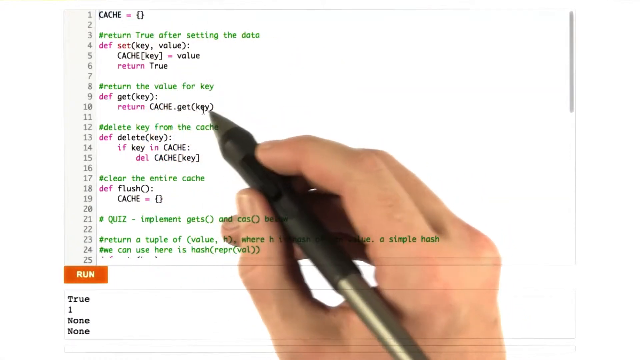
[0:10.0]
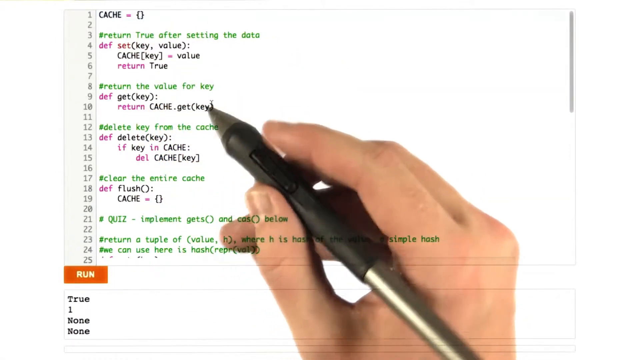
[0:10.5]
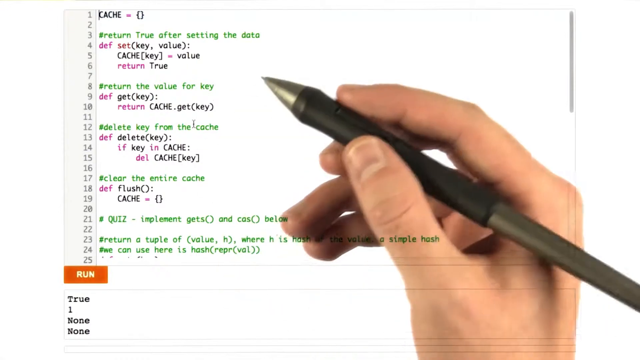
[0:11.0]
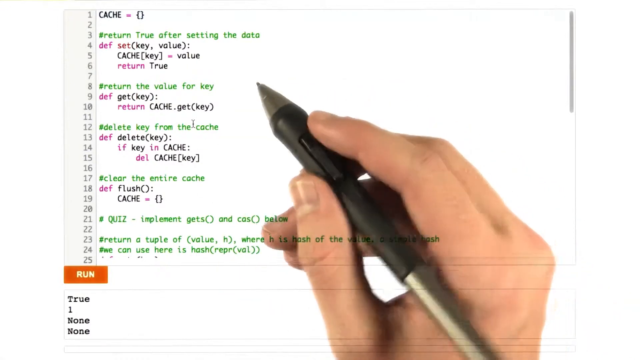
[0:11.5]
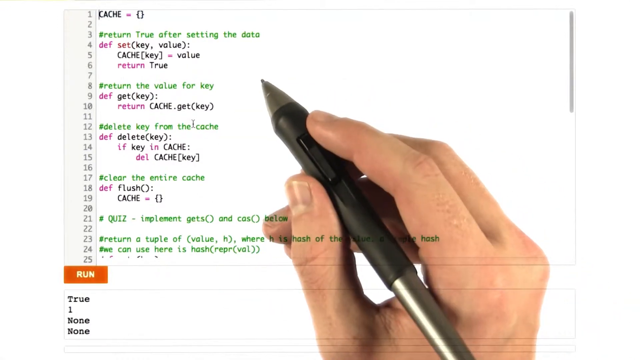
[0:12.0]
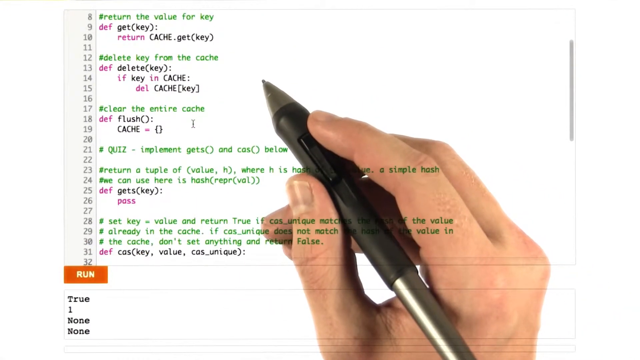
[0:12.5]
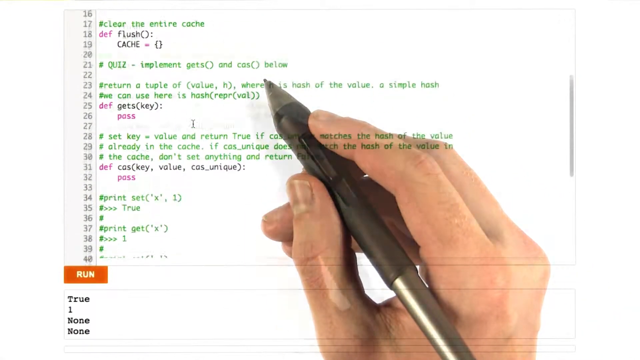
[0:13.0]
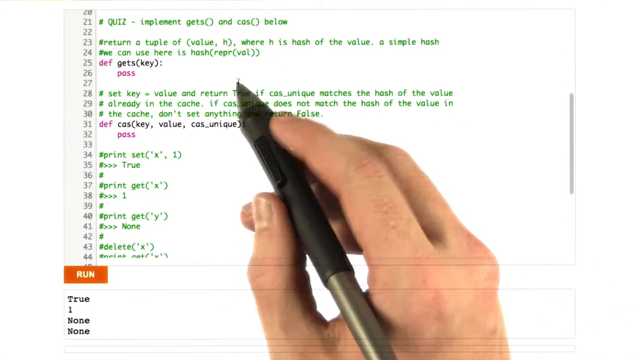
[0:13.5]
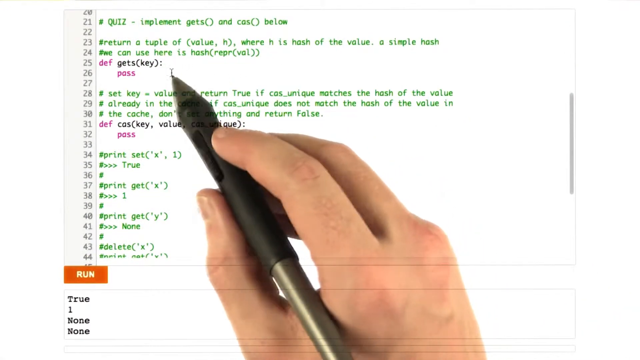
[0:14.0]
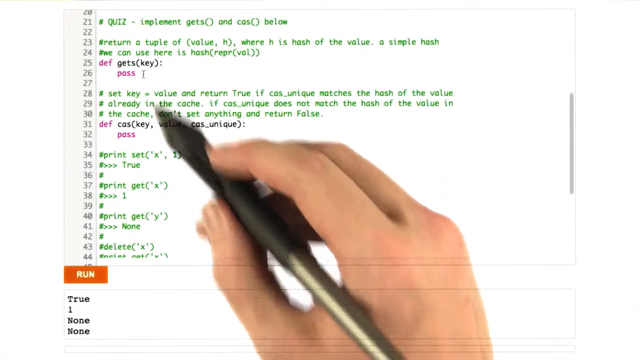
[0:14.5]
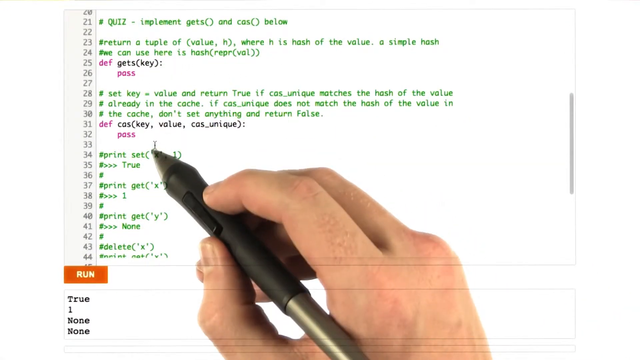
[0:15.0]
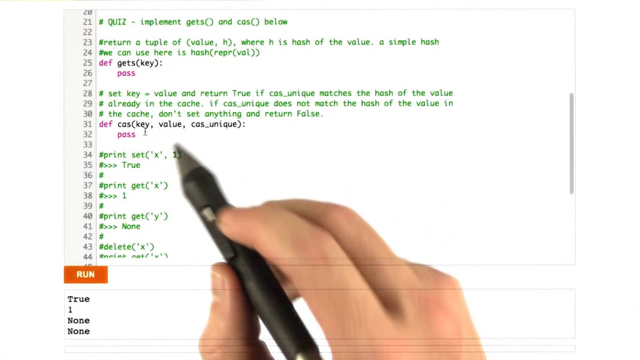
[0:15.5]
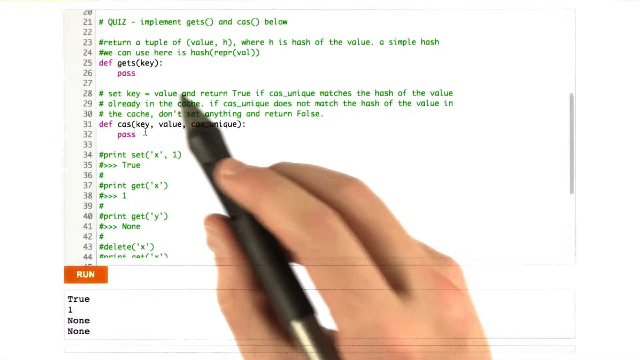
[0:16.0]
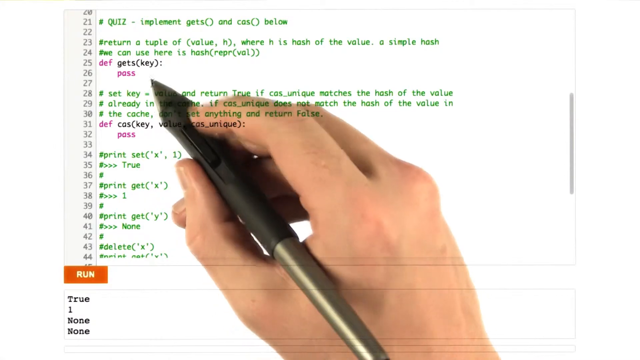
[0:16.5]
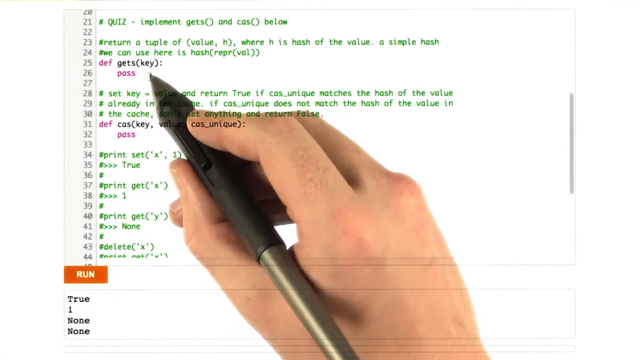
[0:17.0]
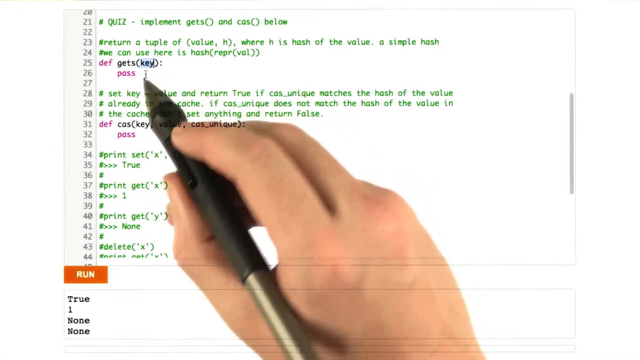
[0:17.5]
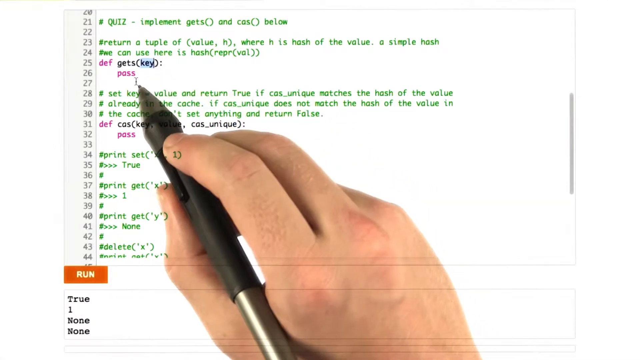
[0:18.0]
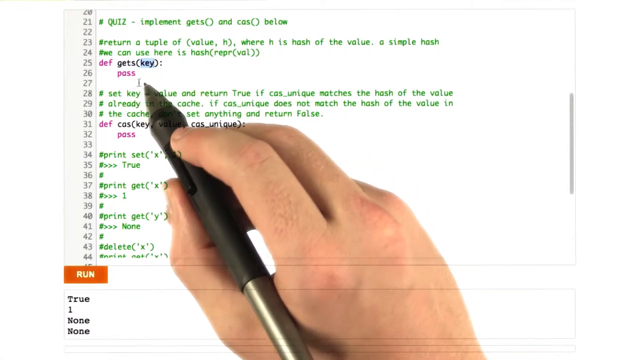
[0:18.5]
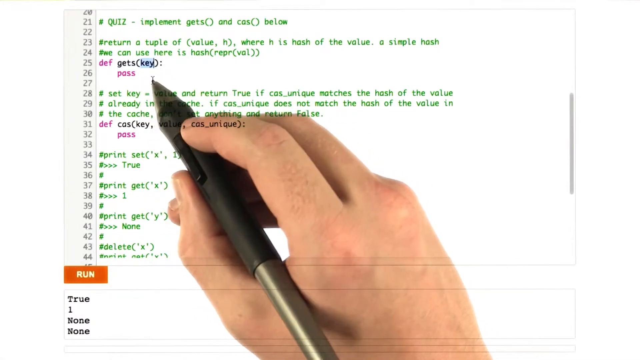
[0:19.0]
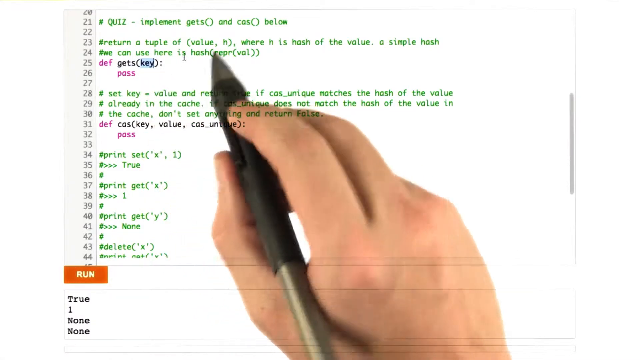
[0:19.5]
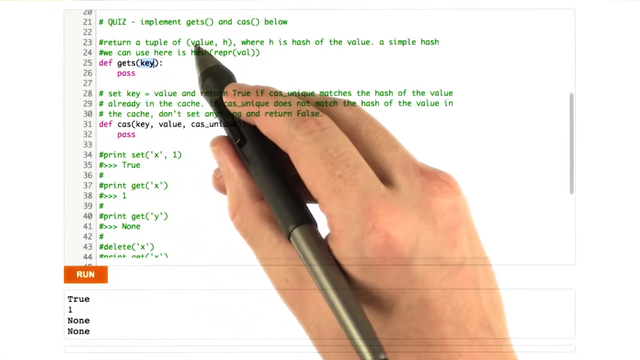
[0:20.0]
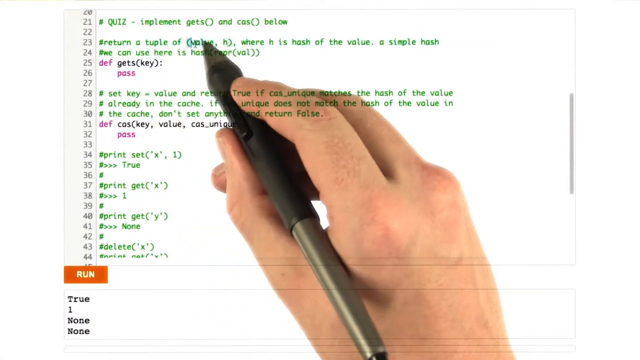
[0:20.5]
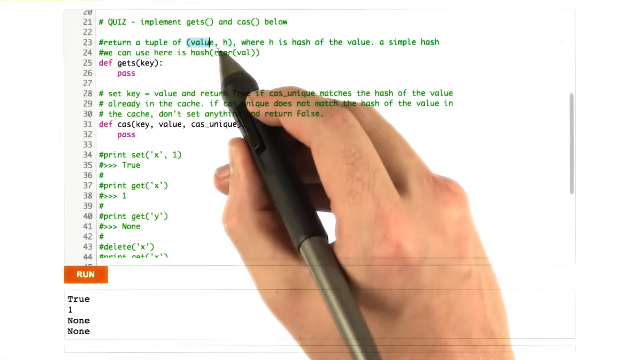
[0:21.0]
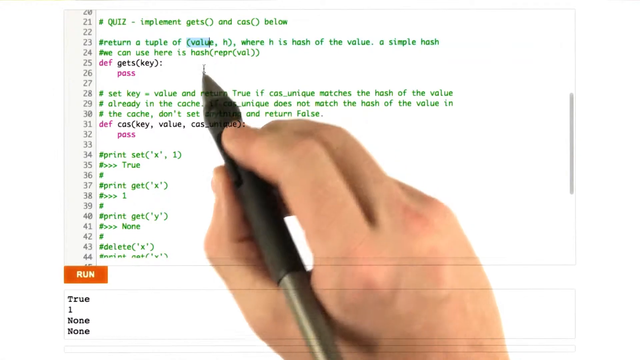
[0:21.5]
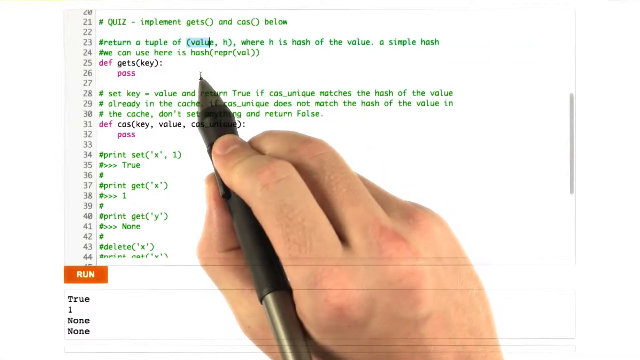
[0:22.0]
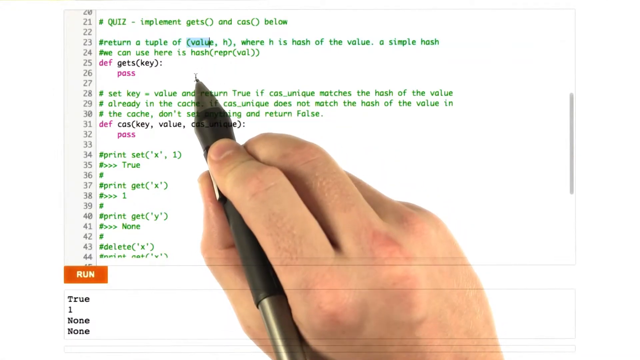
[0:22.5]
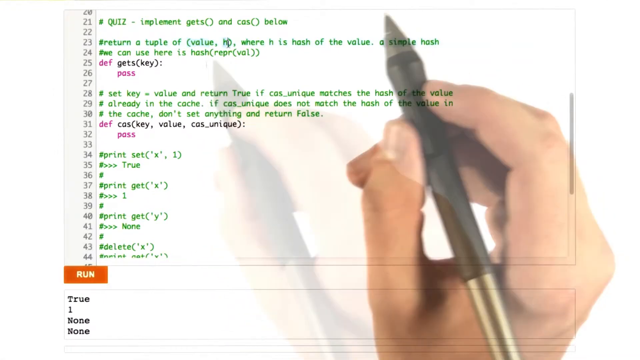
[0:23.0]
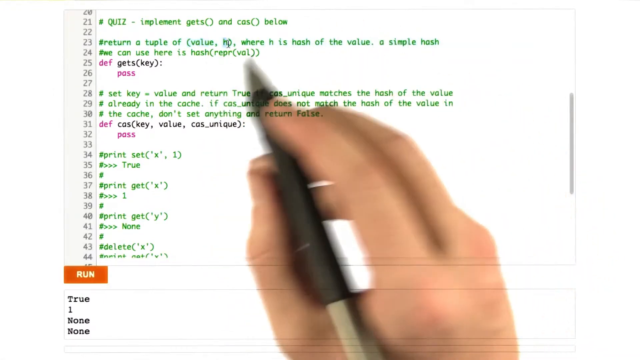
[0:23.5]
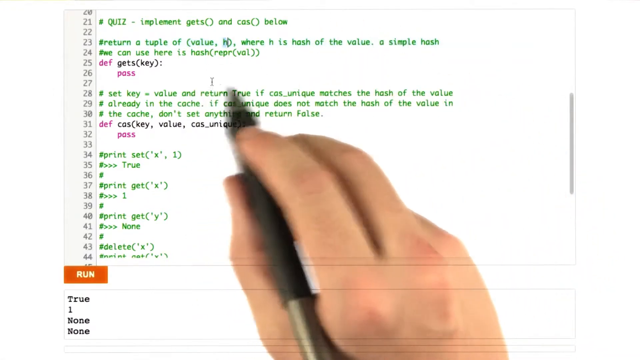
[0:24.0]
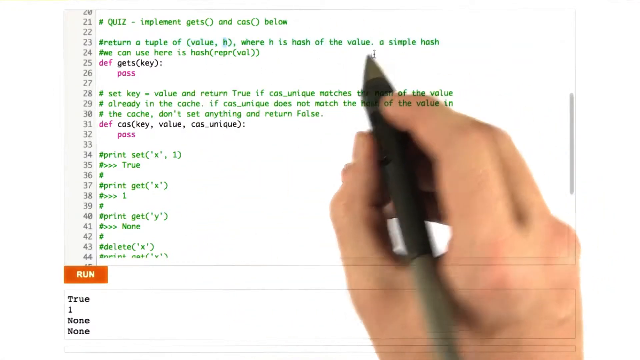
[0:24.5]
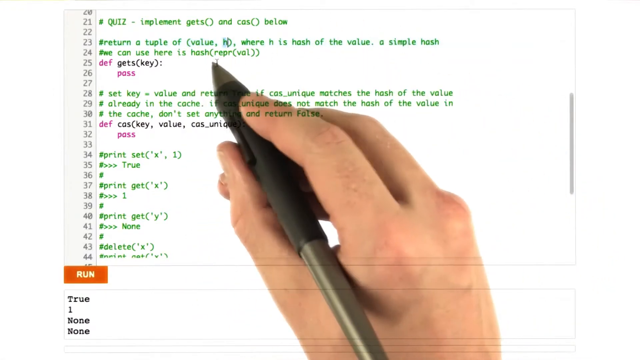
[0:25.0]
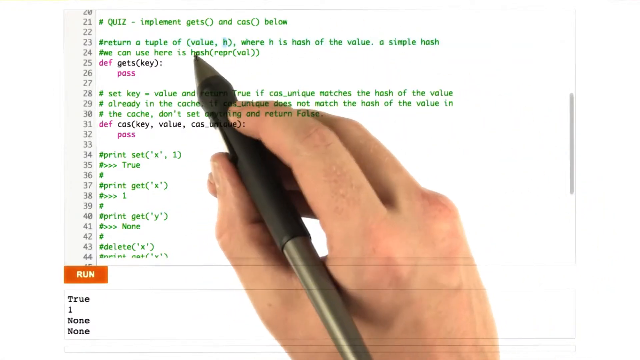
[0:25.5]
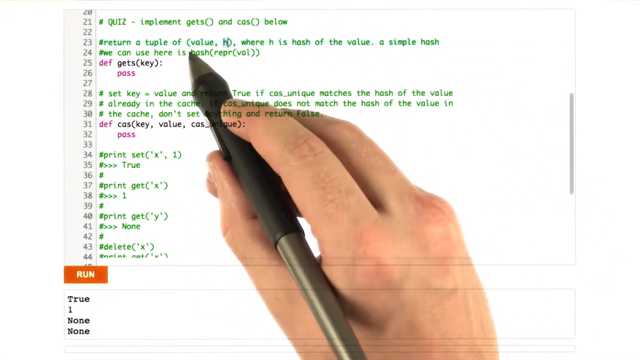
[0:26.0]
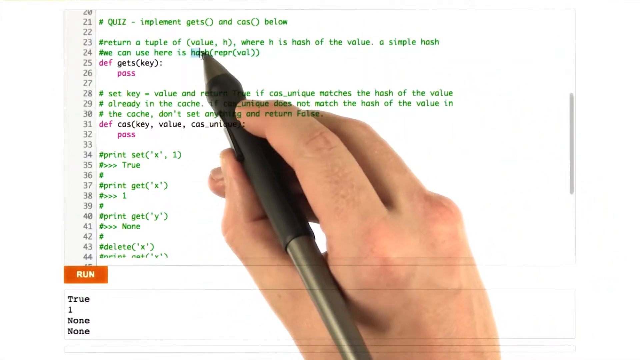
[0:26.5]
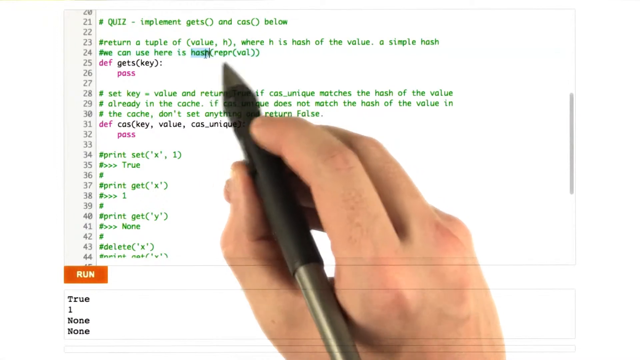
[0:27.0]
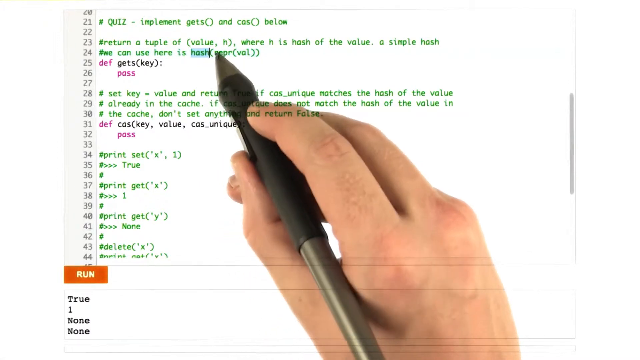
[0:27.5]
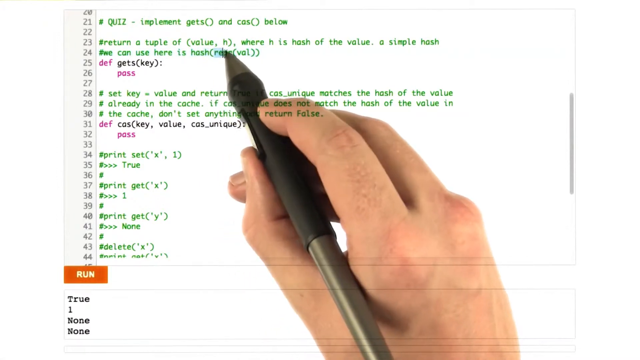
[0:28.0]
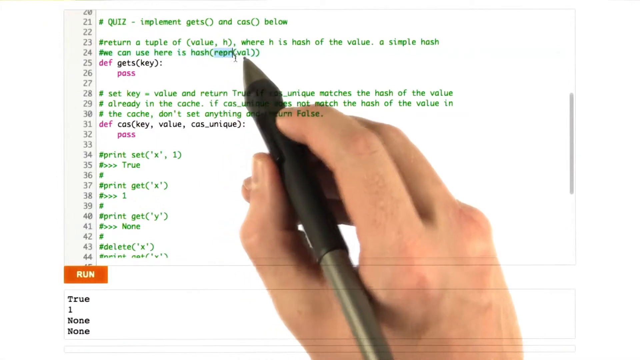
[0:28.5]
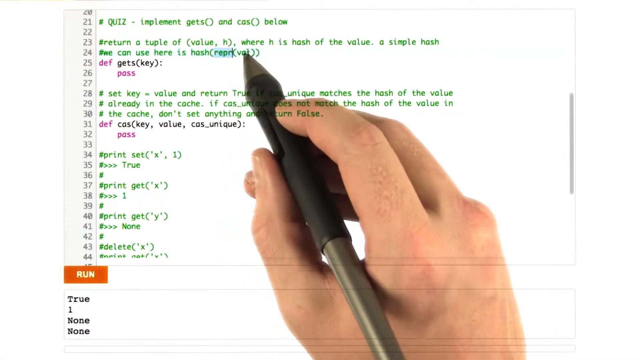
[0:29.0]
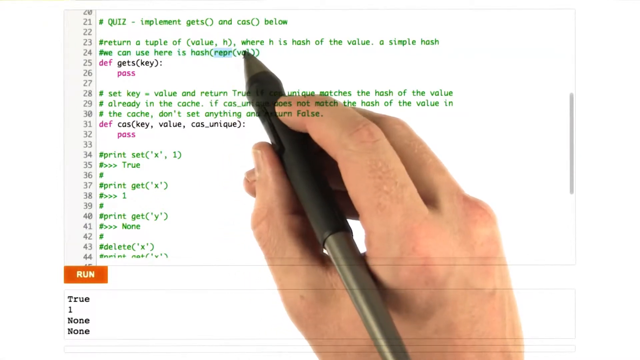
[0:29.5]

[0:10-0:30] The person's right hand is already on the screen, holding the pen, which is black on the barrel and silver from mid-barrel to the tip. The screen scrolls down and the pen is used like a stylus, moving as if underlining the word "harsh" on line 24. The screen scrolls back up, and the pen now looks like it is making highlighting on the screen: as the pen moves across "harsh", the word becomes highlighted in a pale, faint, transparent green. The pen moves under the word "style", then up over the word "value" on line 23. The person highlights "value", moves down, and highlights the letters "RPER".